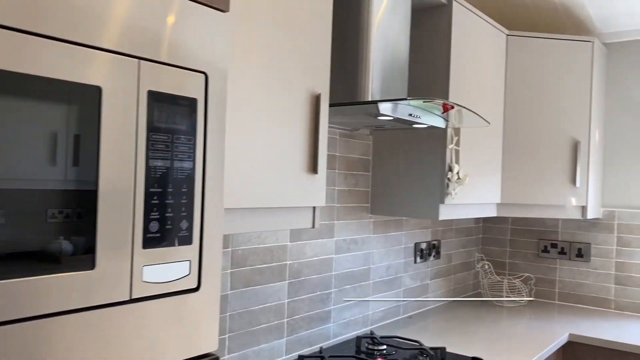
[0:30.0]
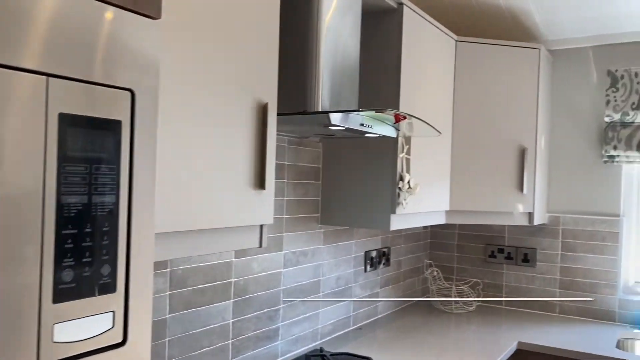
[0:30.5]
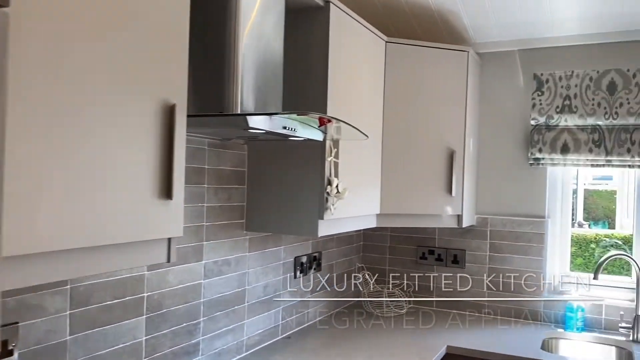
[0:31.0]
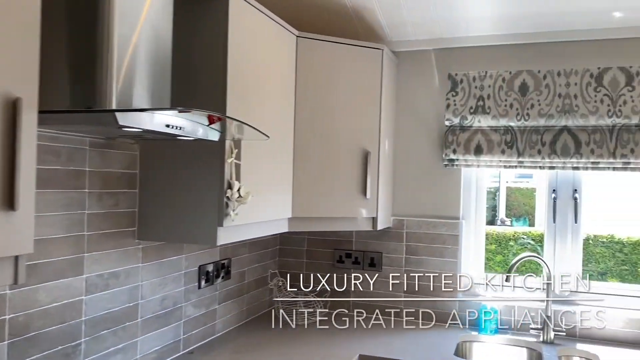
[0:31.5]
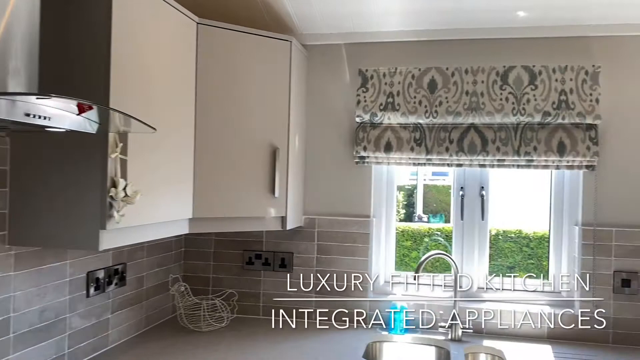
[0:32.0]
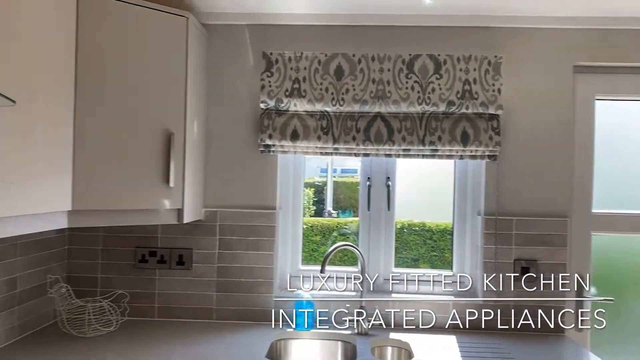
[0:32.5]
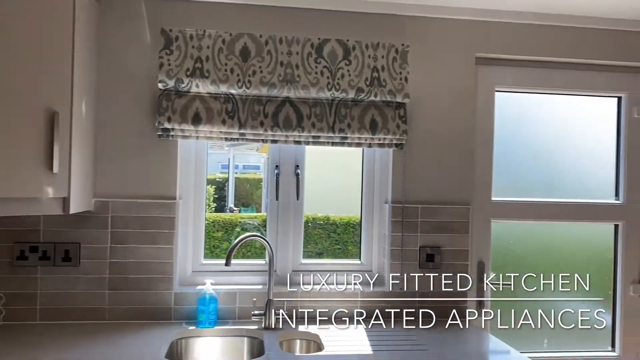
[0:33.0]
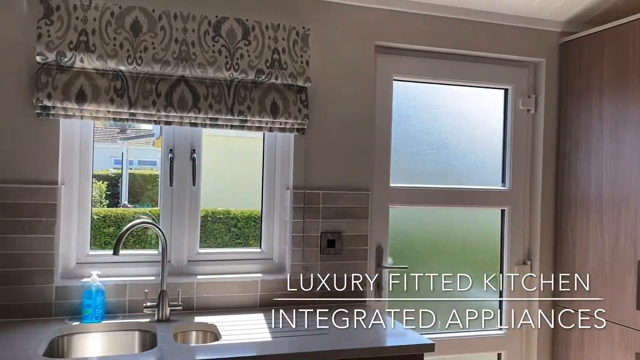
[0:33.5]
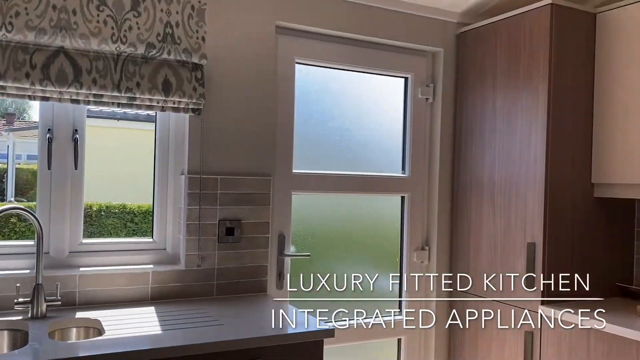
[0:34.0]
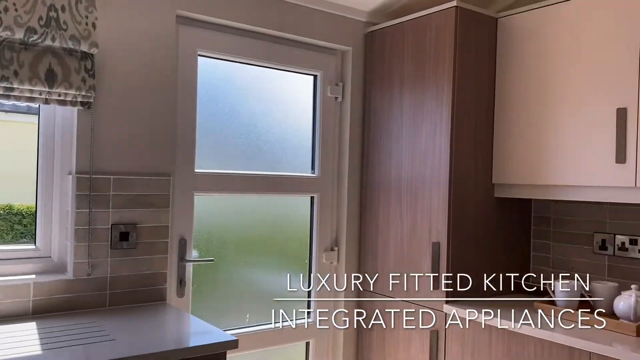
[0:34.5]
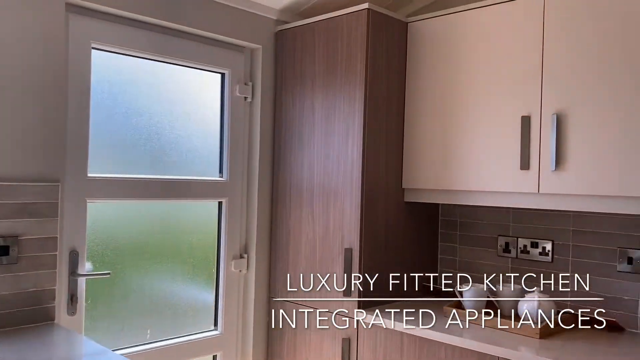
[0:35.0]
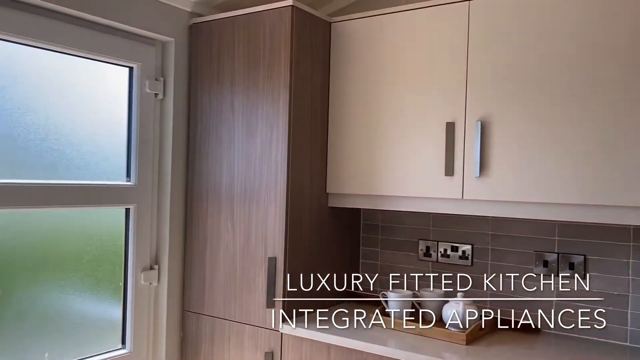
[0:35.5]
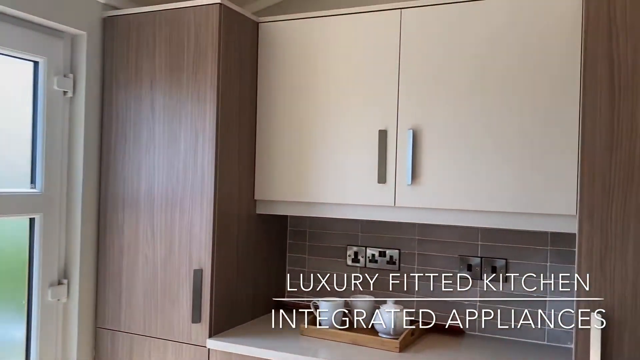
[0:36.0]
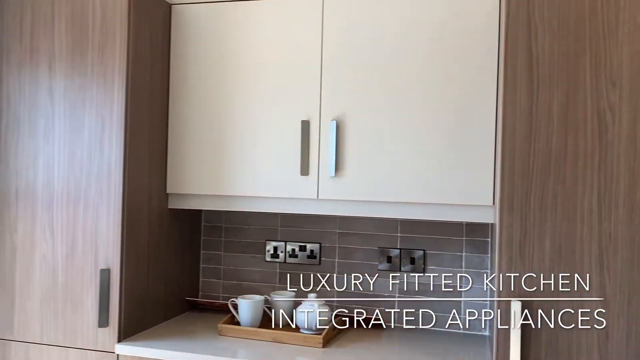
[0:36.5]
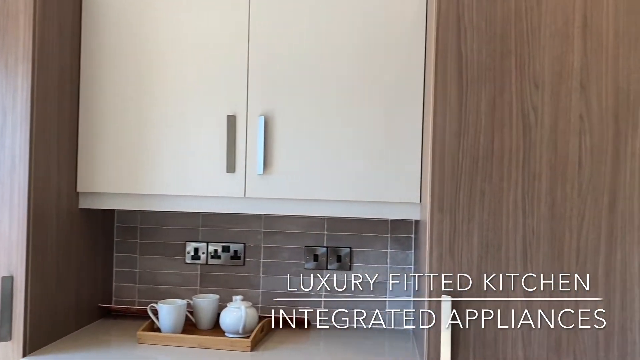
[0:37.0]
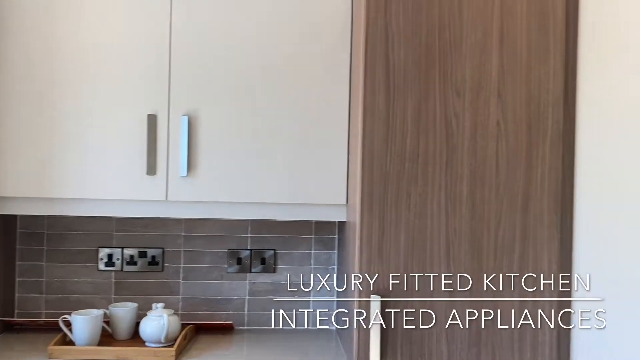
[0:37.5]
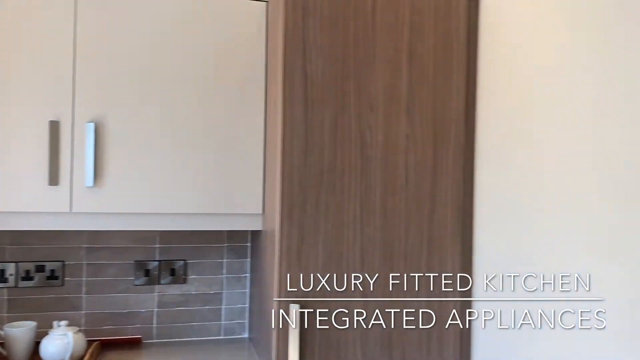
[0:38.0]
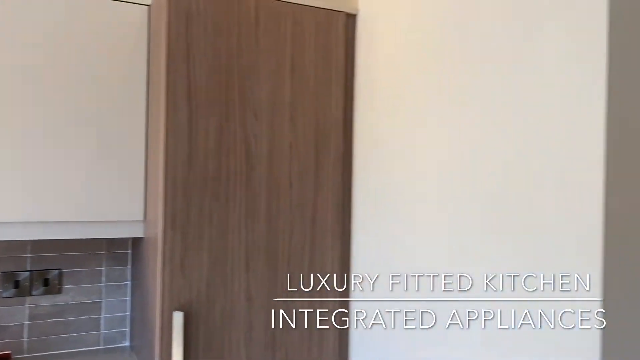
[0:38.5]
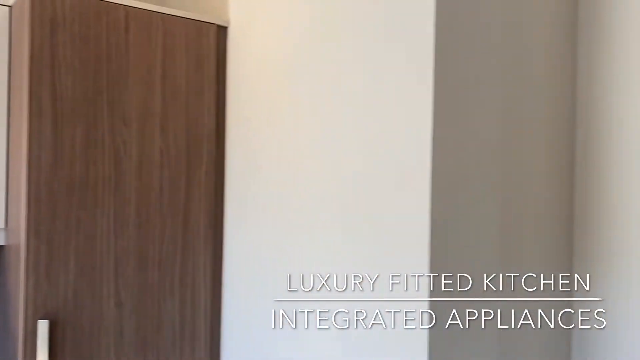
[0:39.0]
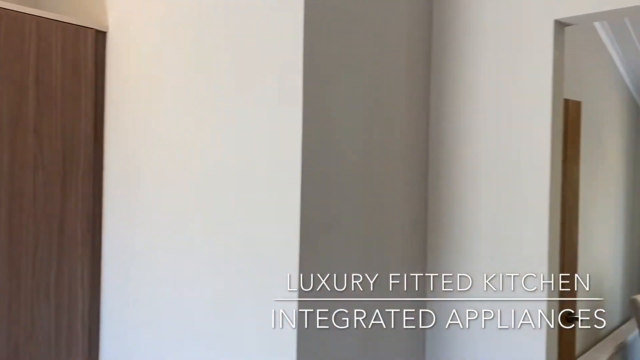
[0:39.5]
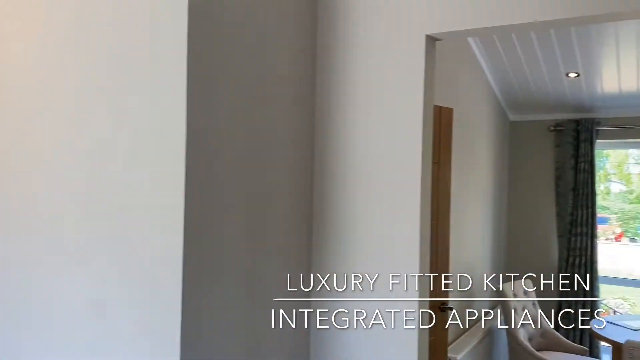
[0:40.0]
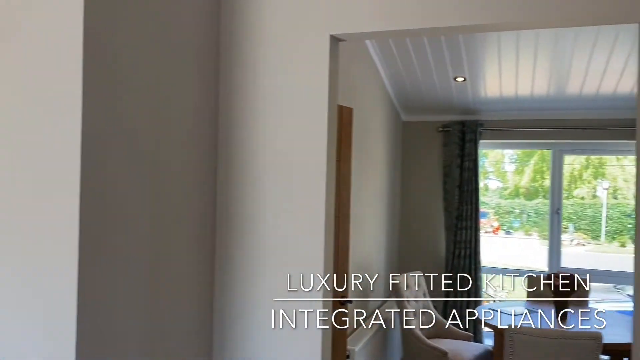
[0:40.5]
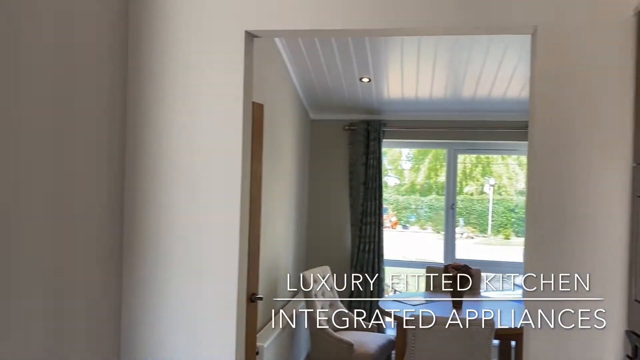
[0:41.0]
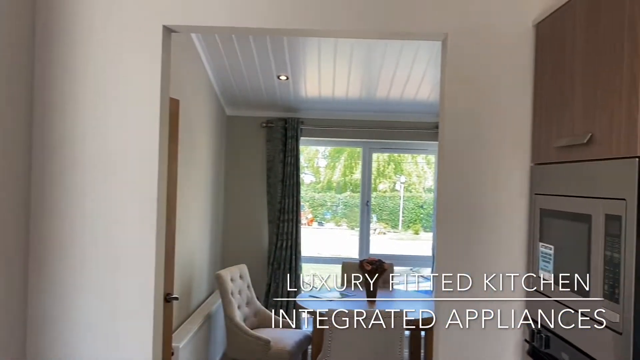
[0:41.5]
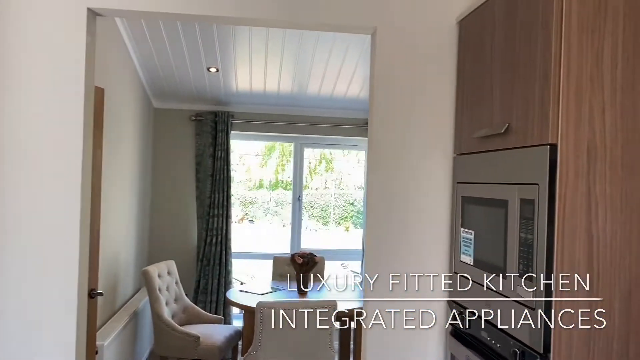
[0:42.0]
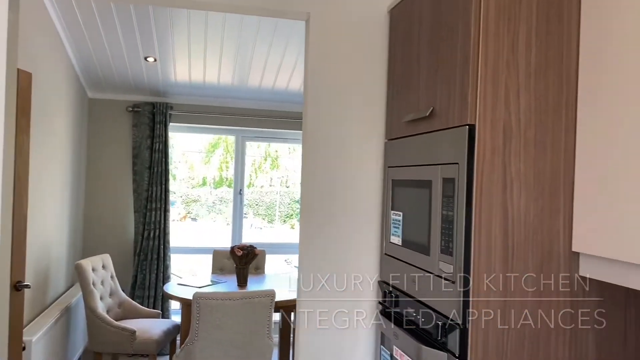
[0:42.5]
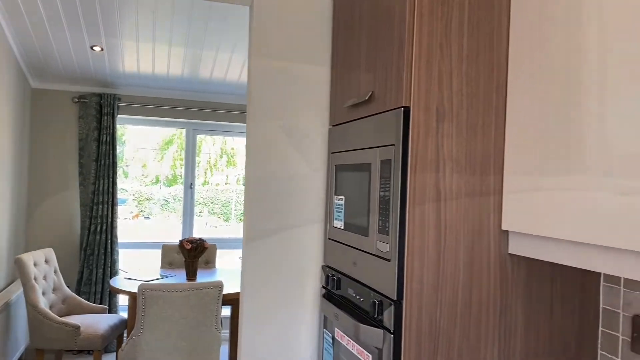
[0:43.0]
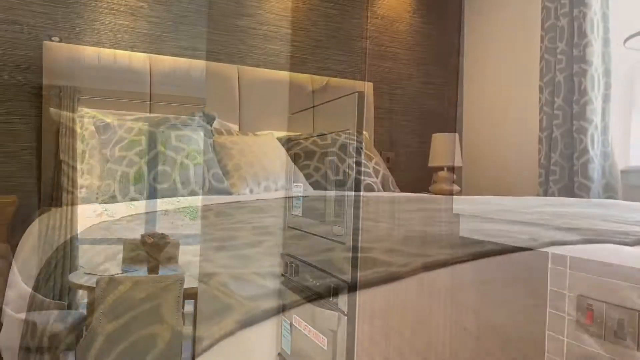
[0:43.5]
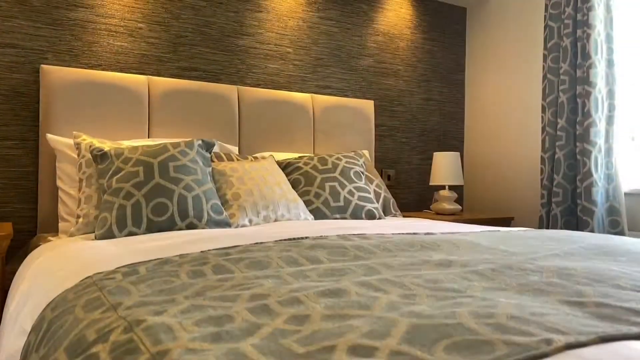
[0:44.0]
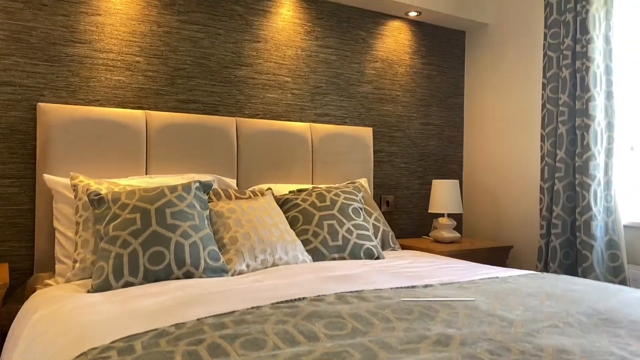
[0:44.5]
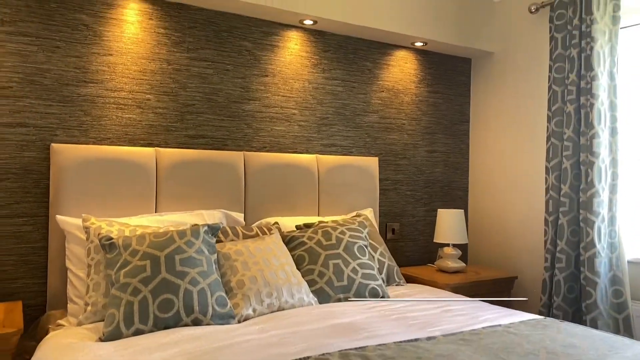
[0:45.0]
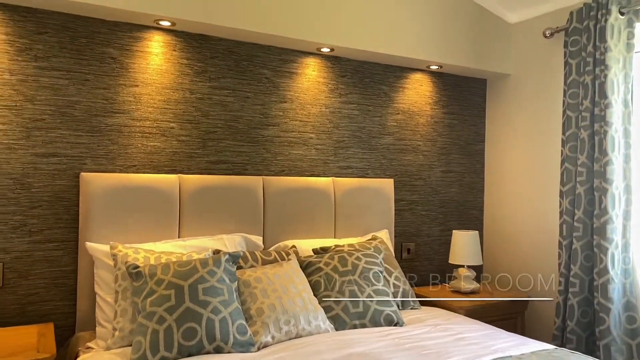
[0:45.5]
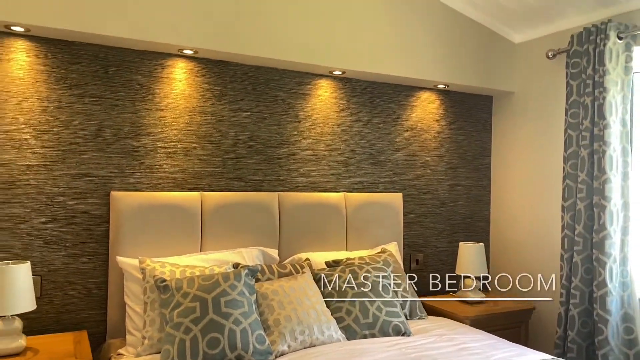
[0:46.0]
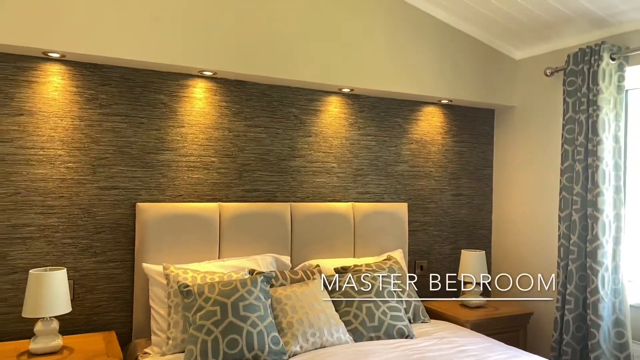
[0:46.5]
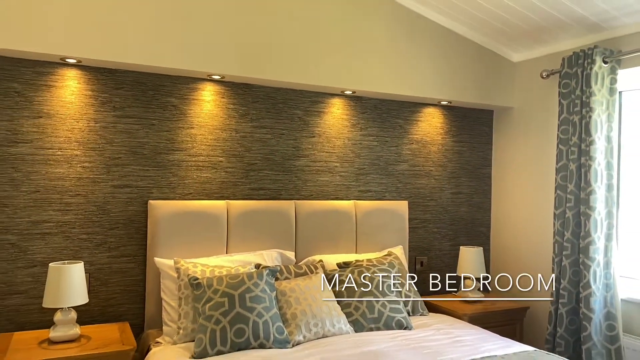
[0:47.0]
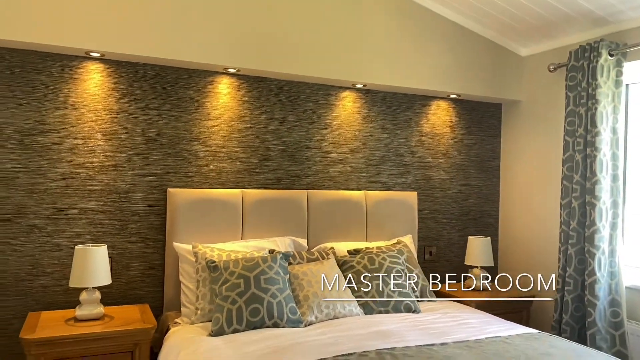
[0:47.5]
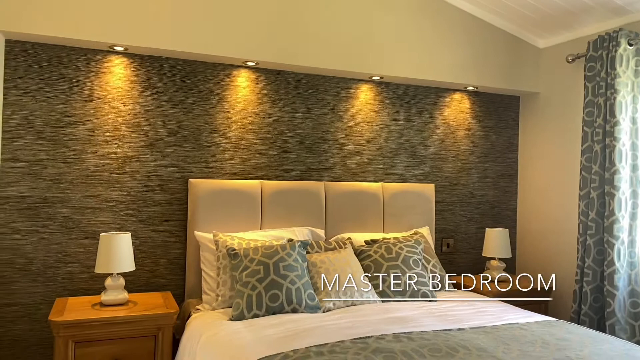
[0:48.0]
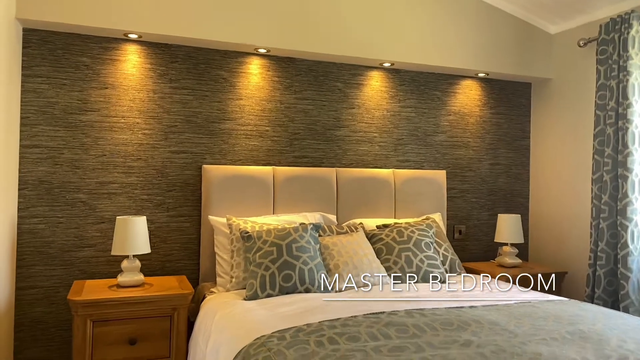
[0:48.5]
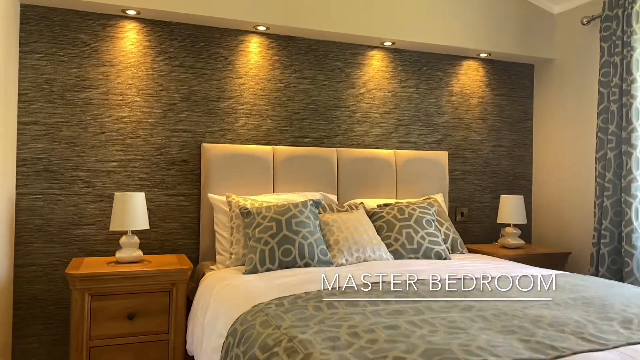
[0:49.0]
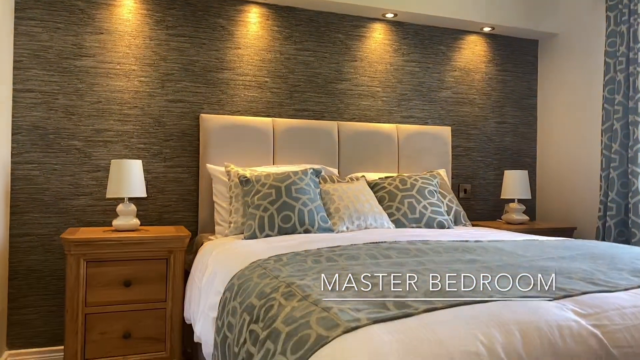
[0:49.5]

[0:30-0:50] The camera pans right across the kitchen. To the right of the air vent are two cabinets sort of forming a V-shape going into the wall, so they are not flat against each other. Further right, sort of at 90 degrees to the stove area, are the sink and faucet, with two windows above the faucet that have silver handles pointing downwards for pulling them open. Further right, a door sort of leads out of the kitchen, and to the right of the door is what looks like another cabinet or drawer storage, with more hanging above, an area for coffee mugs and perhaps some outlets for attaching other items. One more tall cabinet is to the right of that, and as the camera pans over, the entranceway is seen leading to a circular dining table or office table area. The video then moves to the bedroom, where a lofty bed has green sheets on the bottom half and white on the top. The bed has moldable pillows and looks like a hotel bed: two sort of patterned green and white pillows with a brown one between them, two more pillows behind those, and two more plain white pillows behind them. There is a little reading lamp and a window on the right side of the bed, and another reading lamp on the left side.